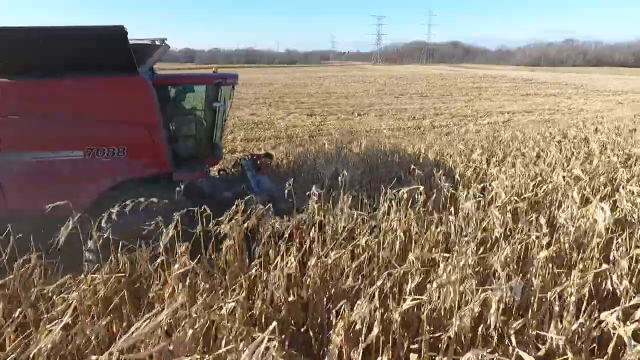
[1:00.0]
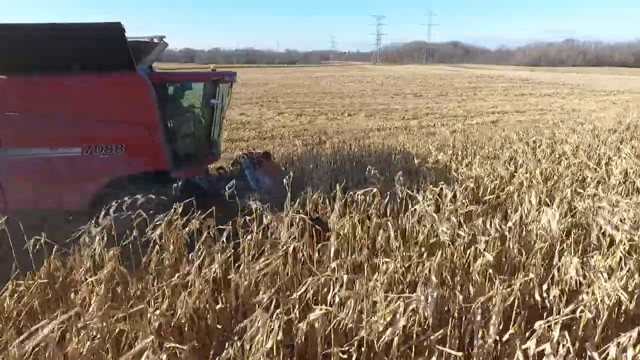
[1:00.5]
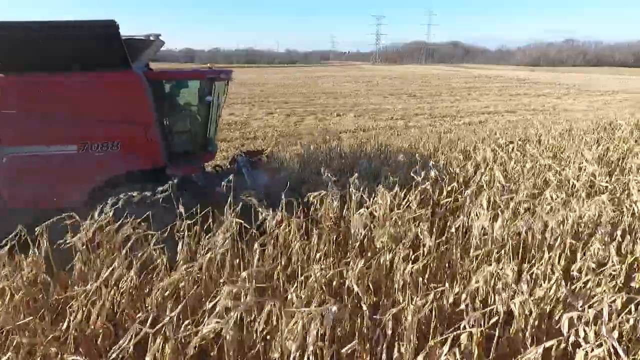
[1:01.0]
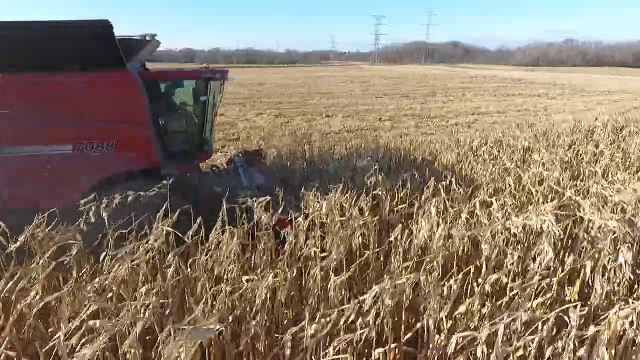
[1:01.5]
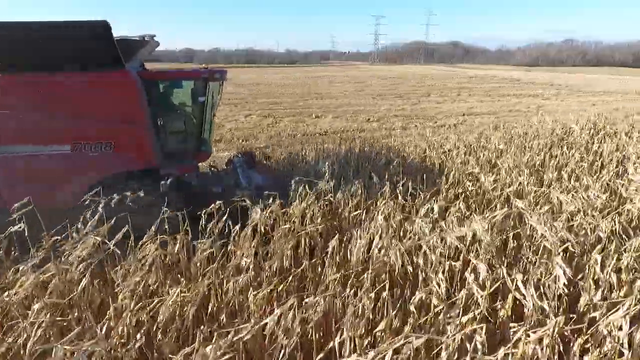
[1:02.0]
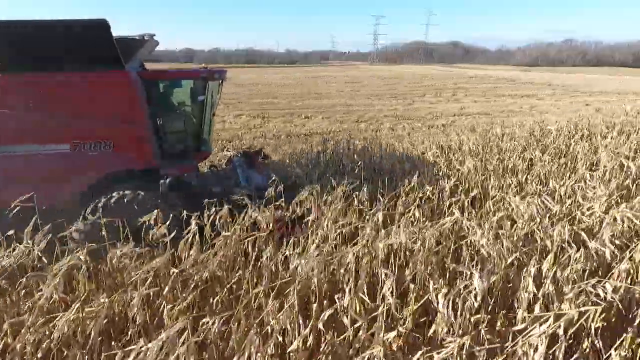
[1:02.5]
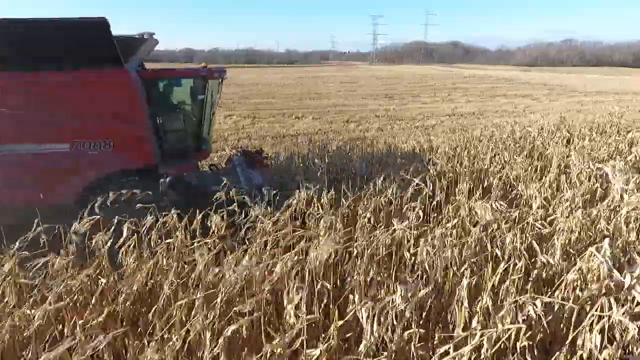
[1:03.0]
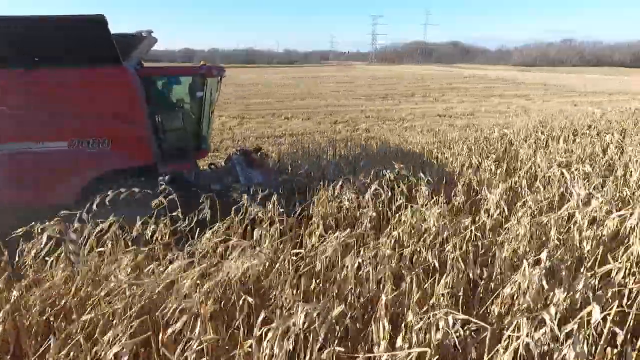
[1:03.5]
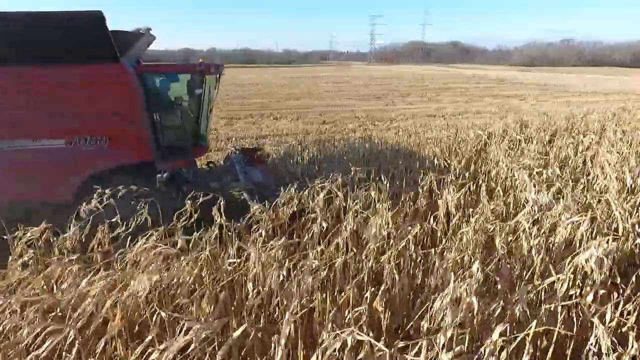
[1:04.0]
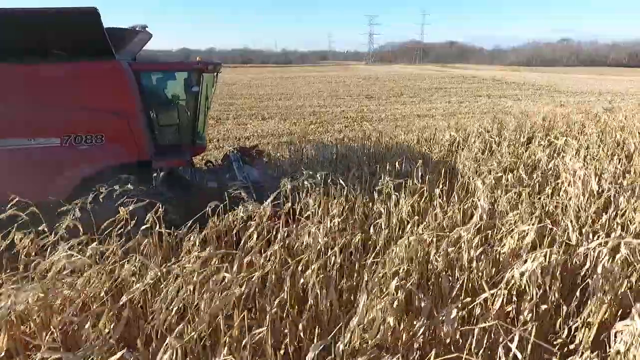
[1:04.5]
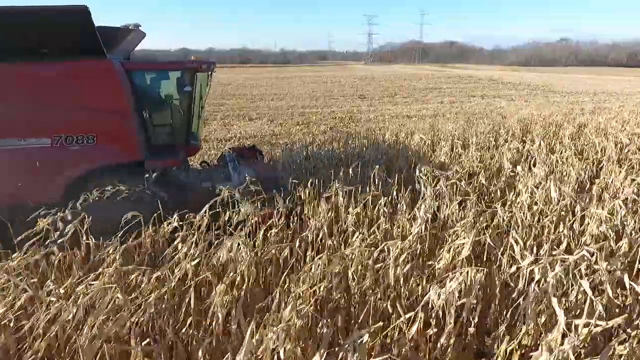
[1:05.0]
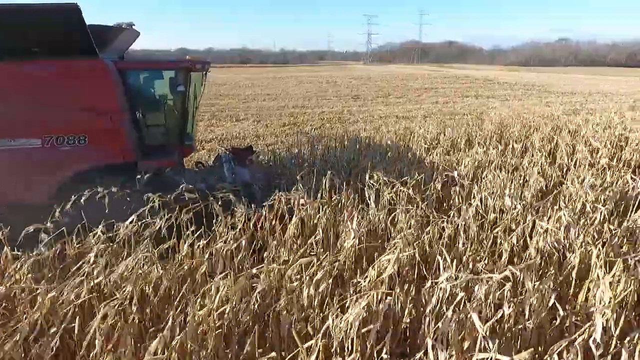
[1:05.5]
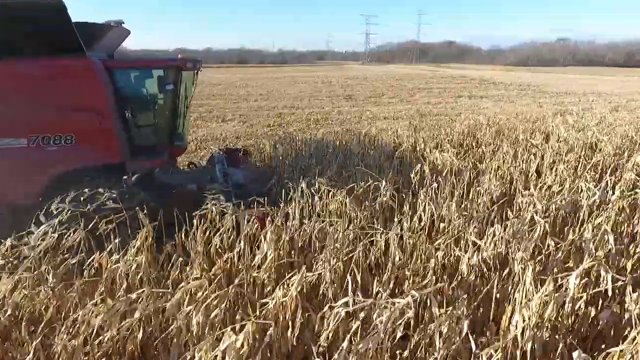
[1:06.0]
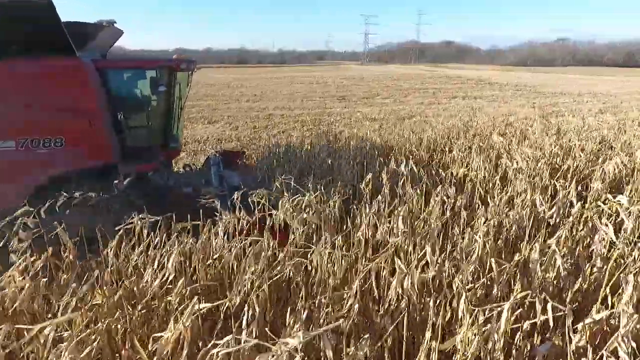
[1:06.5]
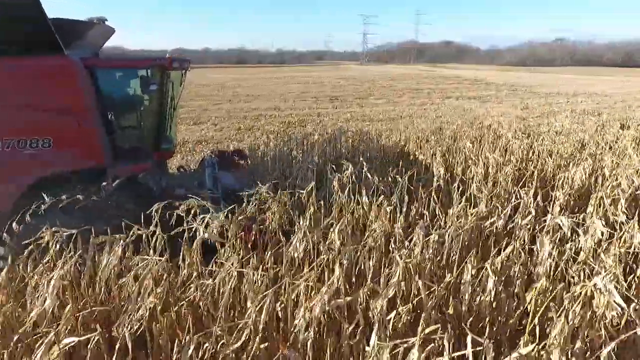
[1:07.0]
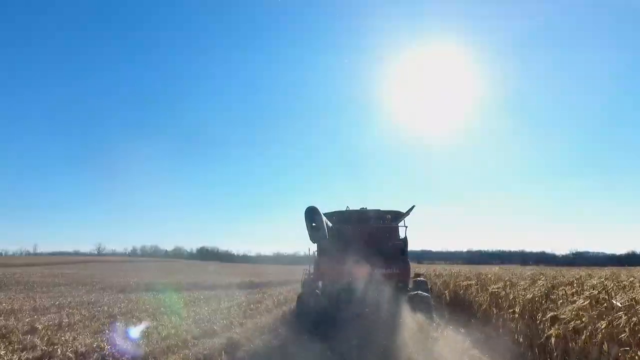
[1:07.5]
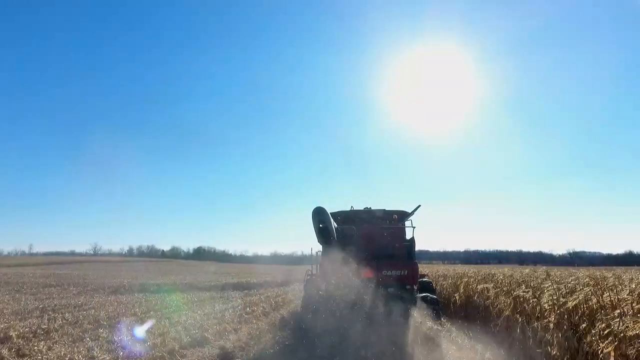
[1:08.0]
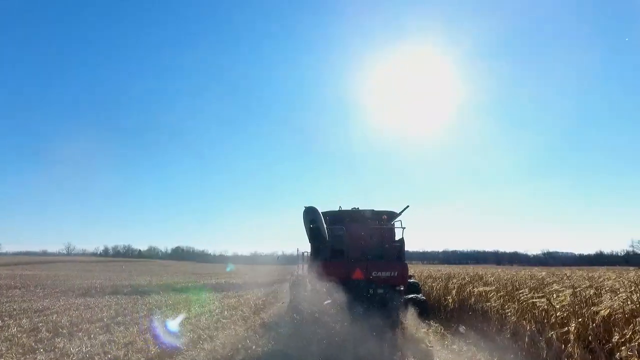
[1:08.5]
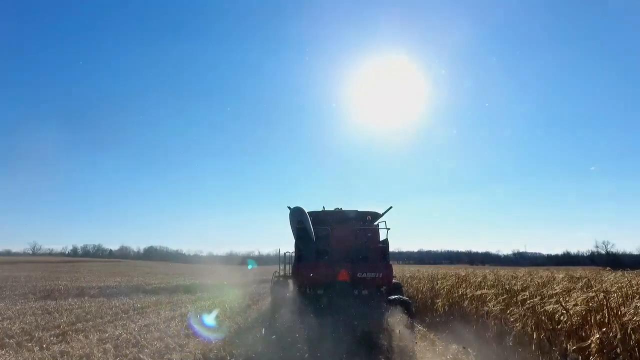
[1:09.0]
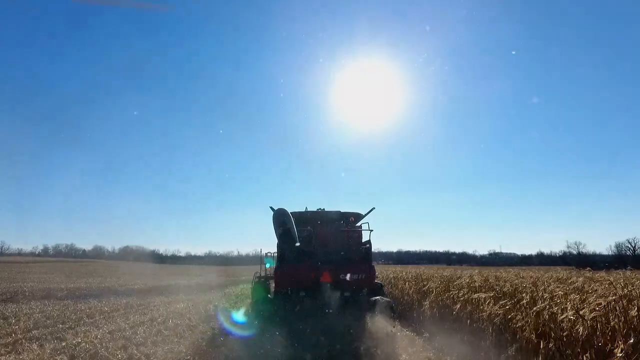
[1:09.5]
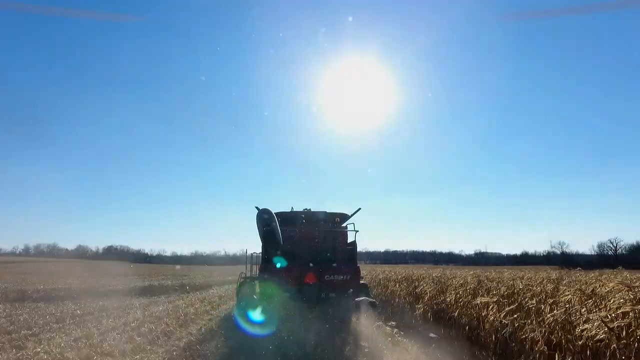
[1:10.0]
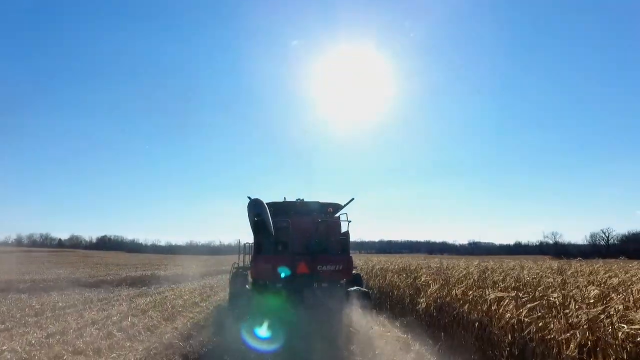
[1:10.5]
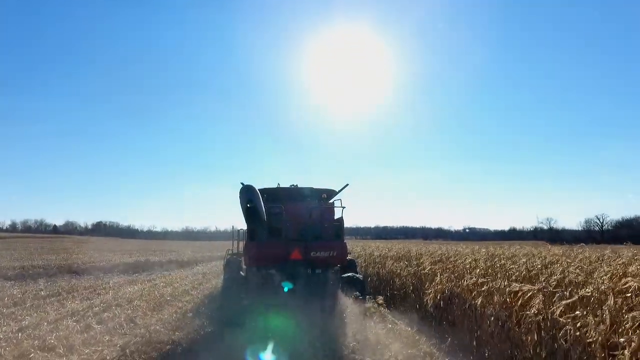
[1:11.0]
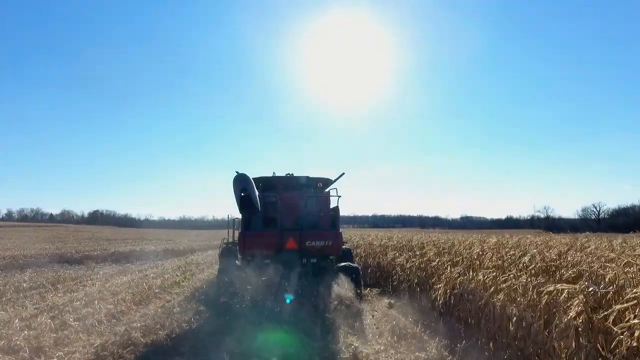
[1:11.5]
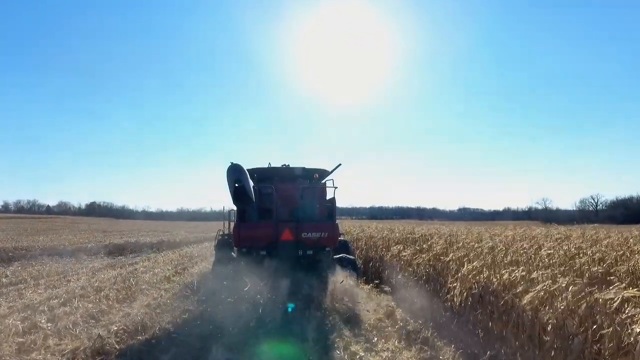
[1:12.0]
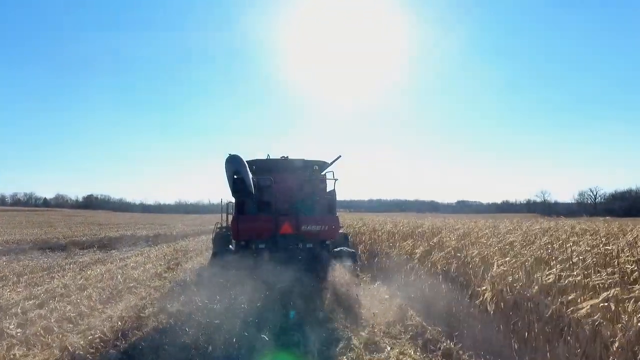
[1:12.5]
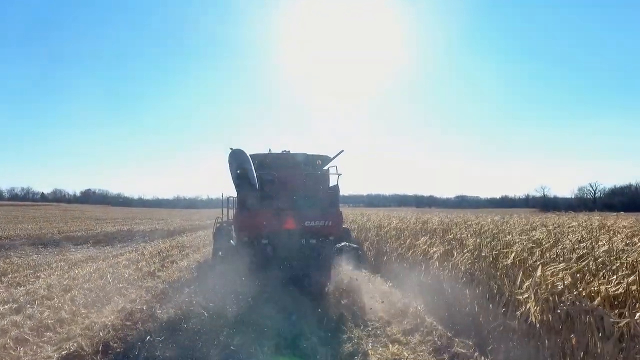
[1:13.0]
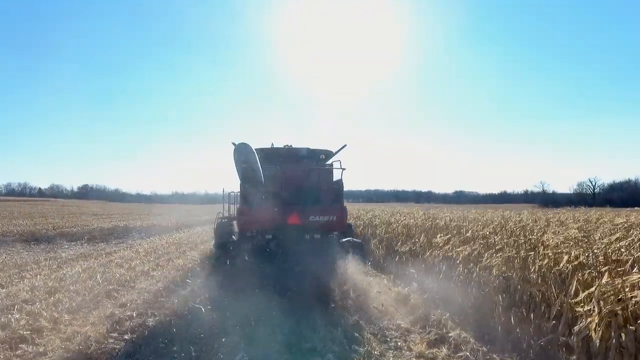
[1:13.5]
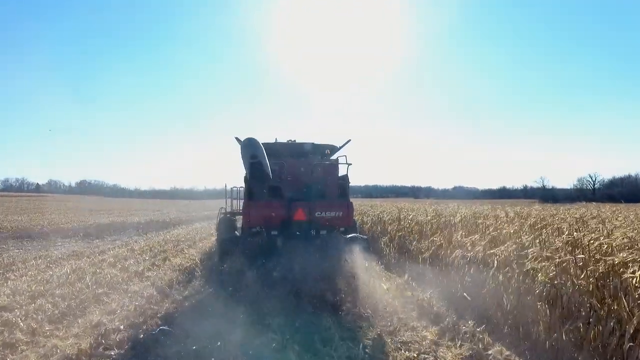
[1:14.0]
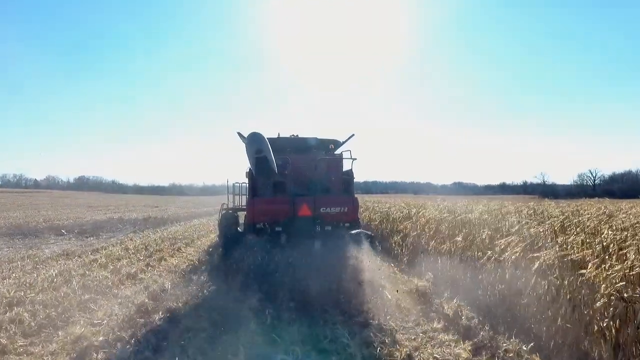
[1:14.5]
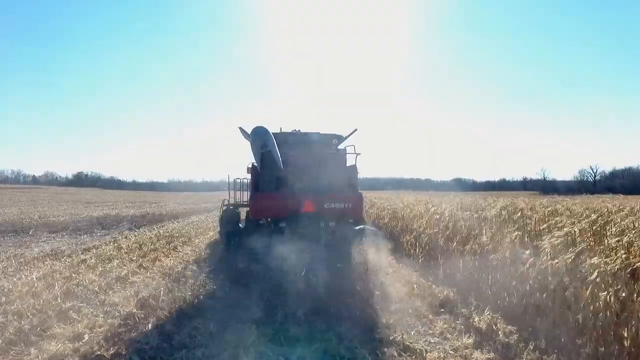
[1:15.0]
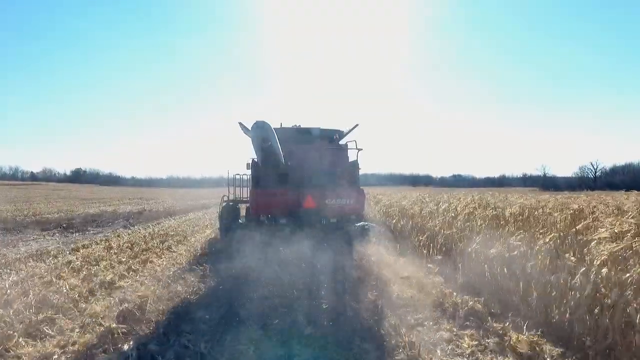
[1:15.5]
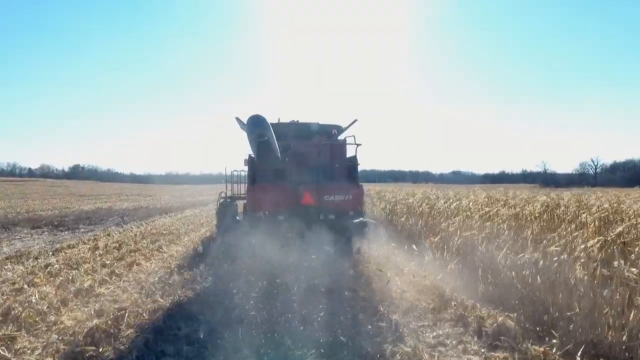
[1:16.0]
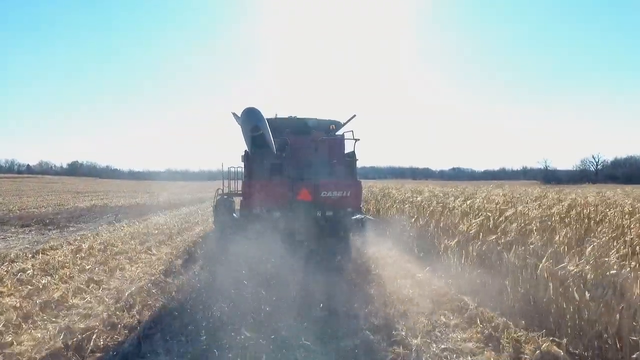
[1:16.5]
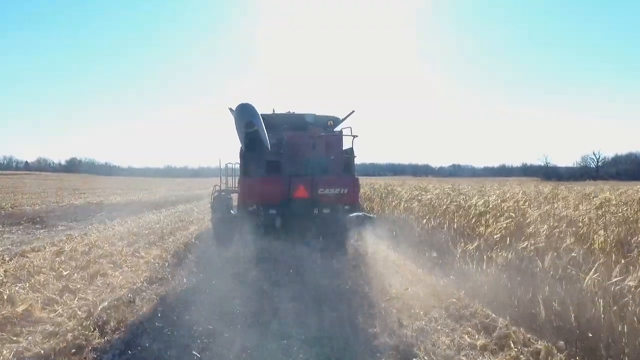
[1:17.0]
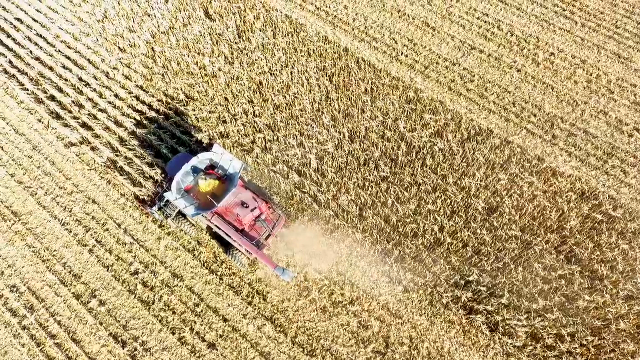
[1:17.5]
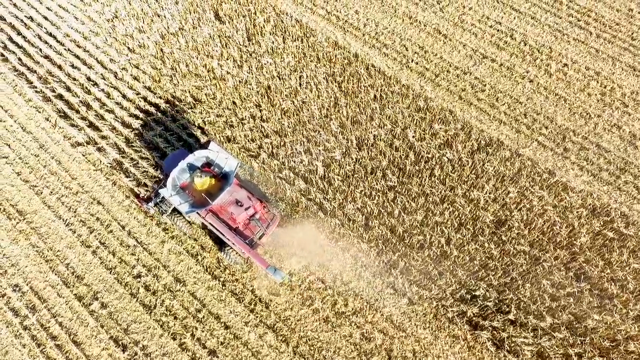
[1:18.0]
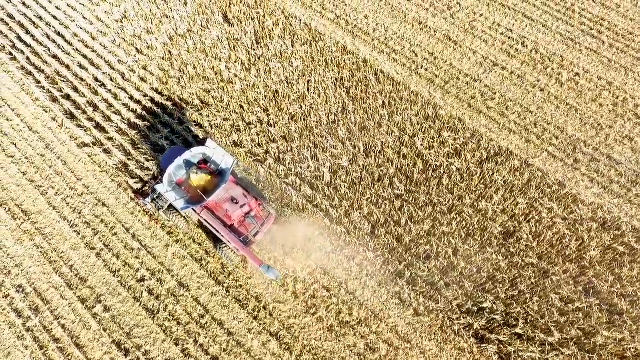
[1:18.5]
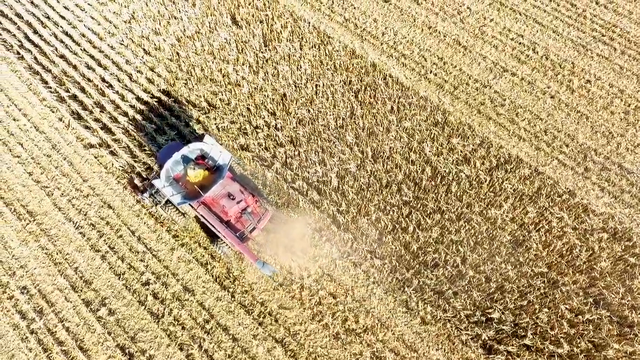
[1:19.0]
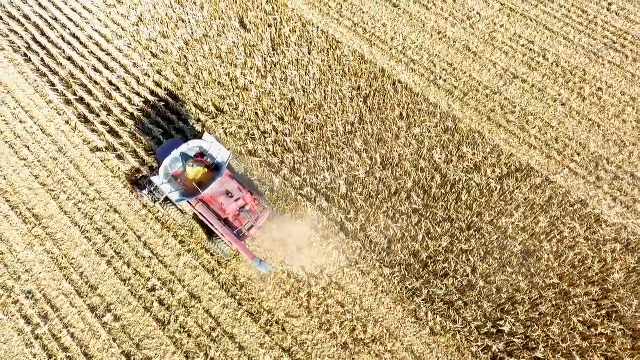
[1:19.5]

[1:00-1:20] The red tractor comes from the left side of the screen and drives to the right, going through tall stalks of wheat. The number 7088 is visible on it. The driver is visible inside the small glass enclosure where the steering wheel is, operating the machinery. As the tractor moves forward, a small arm with a blade at the front cuts down the stalks of wheat. The scene then changes to a view from the back, with the camera roughly right behind the tractor. The sky is blue with no clouds and the sun is bright and full, suggesting it is probably around midday, and it looks like it is probably somewhere fairly warm. A few tree lines are visible in the background; otherwise there is mostly just a large expanse of farmland. The camera then switches to an overhead bird's-eye view of the tractor moving forward roughly toward the top left of the screen.